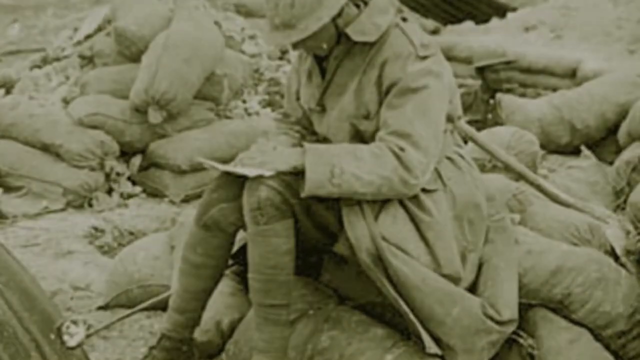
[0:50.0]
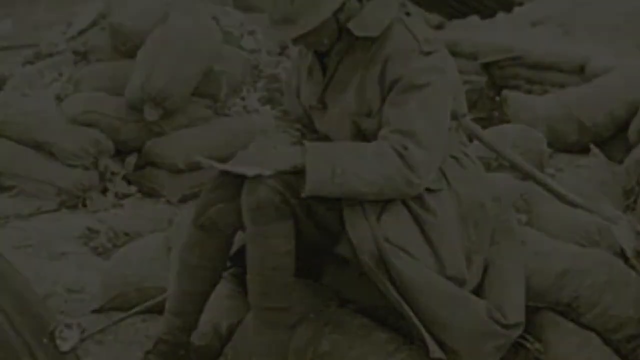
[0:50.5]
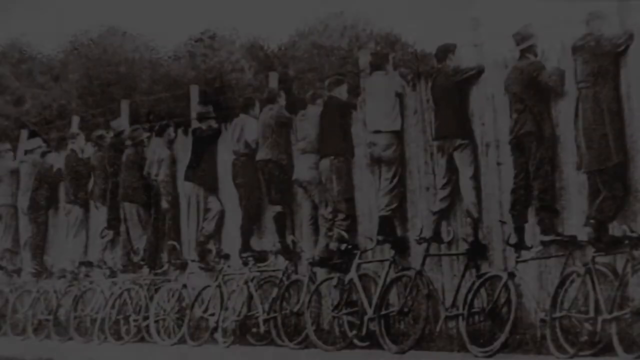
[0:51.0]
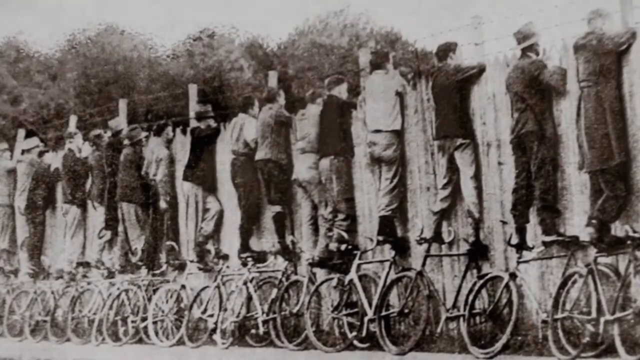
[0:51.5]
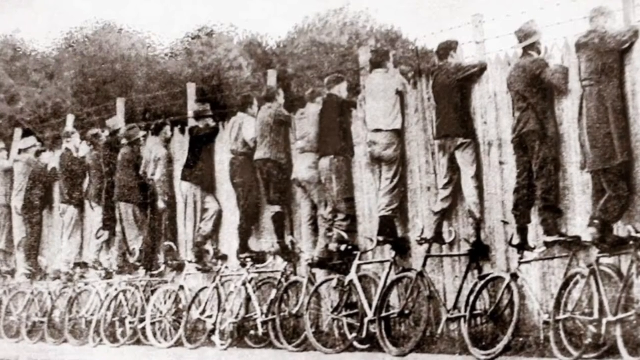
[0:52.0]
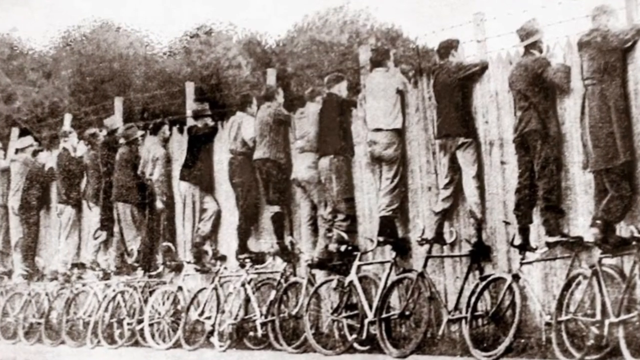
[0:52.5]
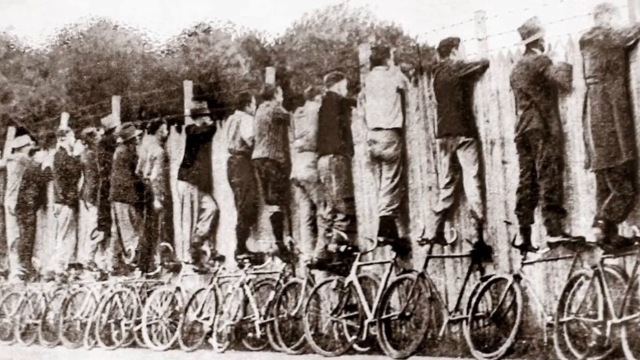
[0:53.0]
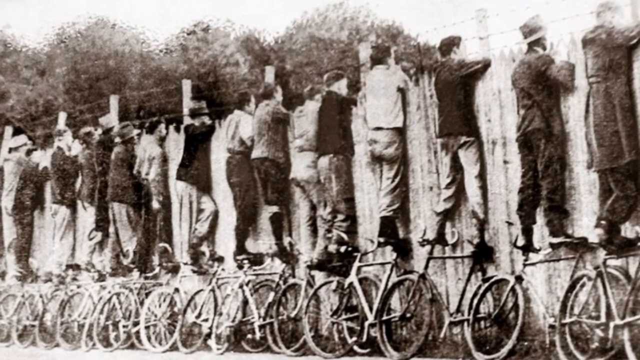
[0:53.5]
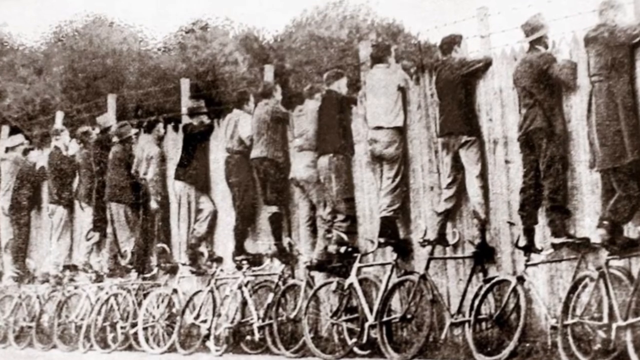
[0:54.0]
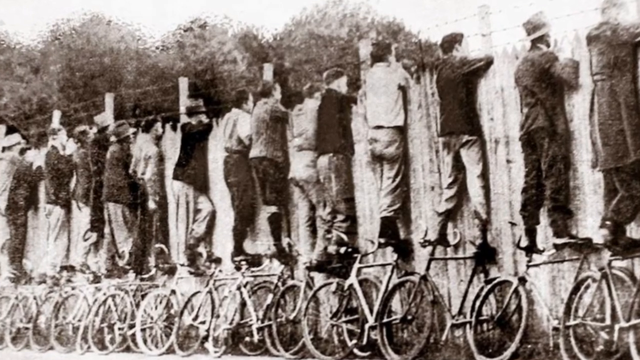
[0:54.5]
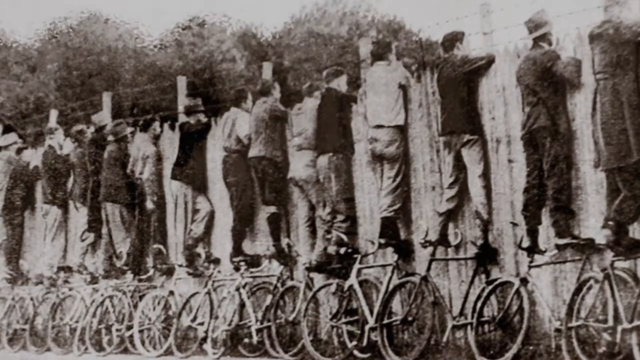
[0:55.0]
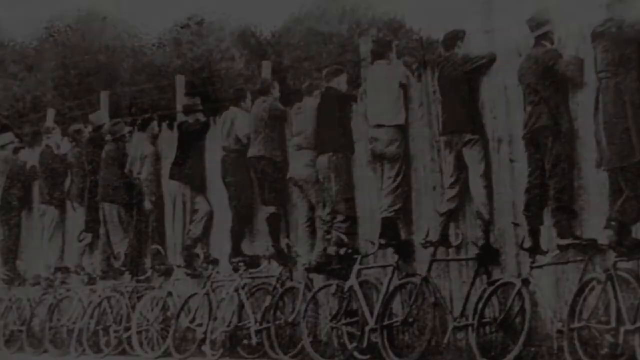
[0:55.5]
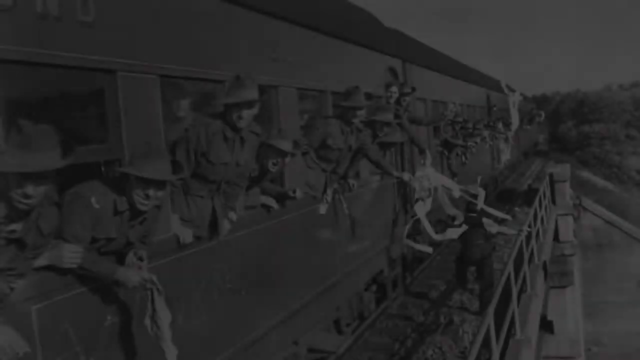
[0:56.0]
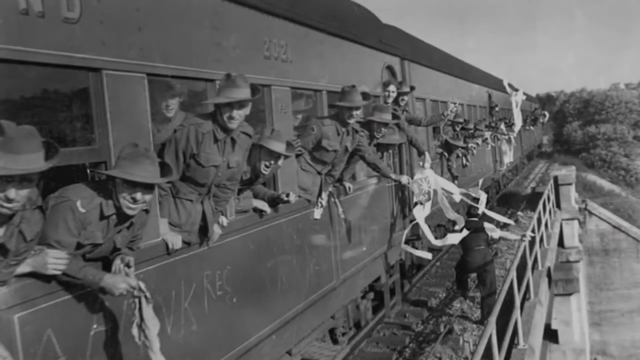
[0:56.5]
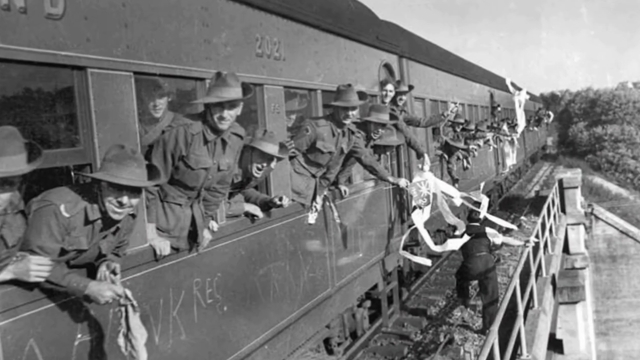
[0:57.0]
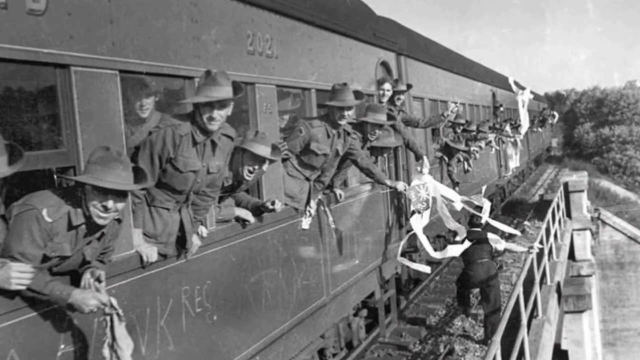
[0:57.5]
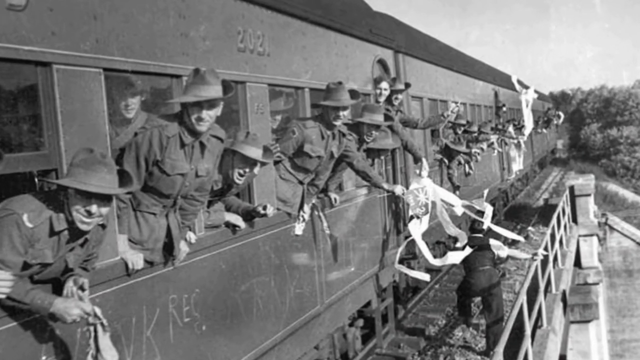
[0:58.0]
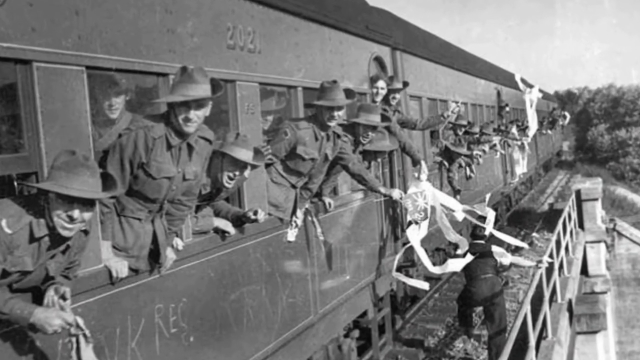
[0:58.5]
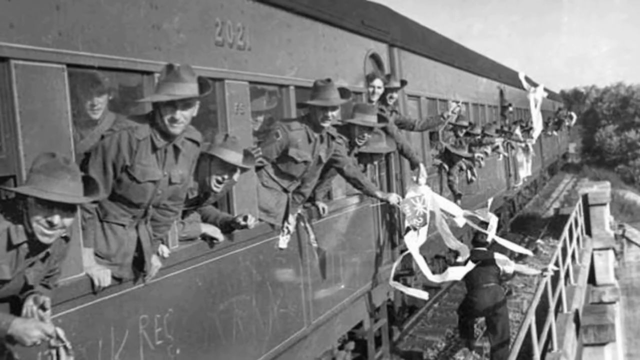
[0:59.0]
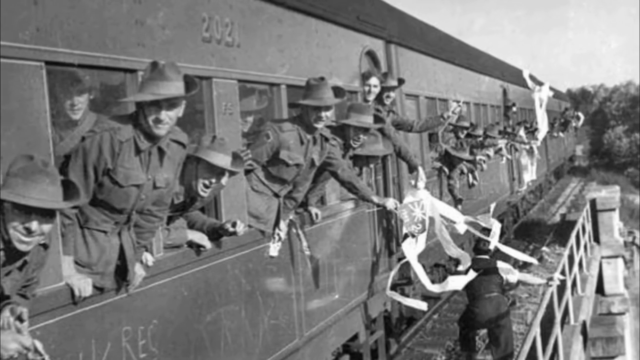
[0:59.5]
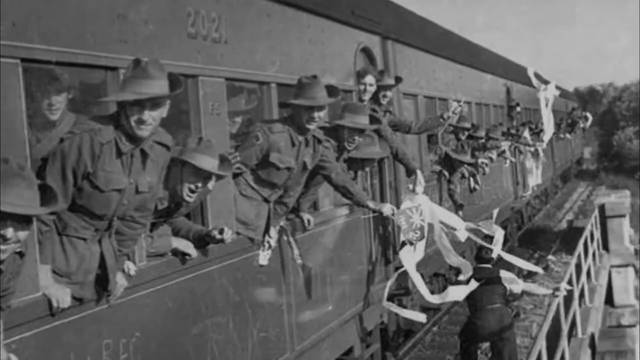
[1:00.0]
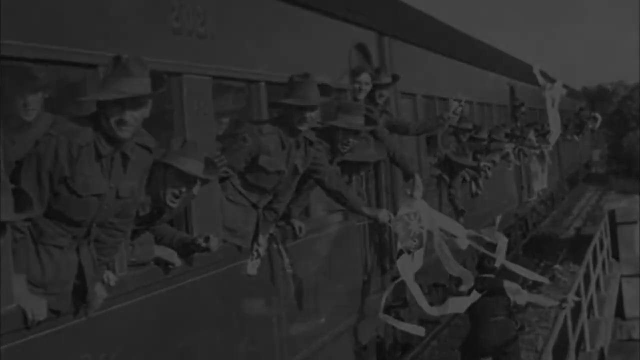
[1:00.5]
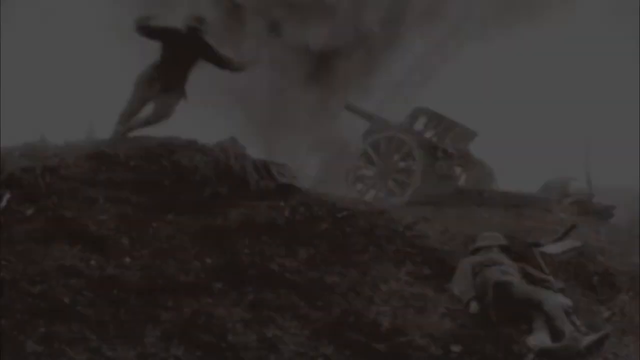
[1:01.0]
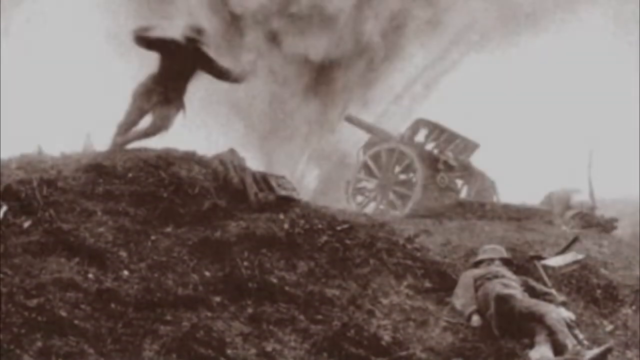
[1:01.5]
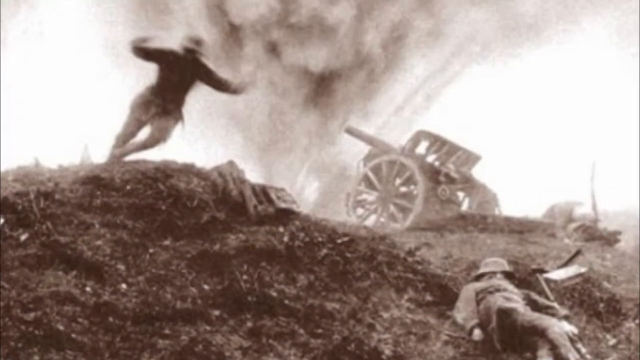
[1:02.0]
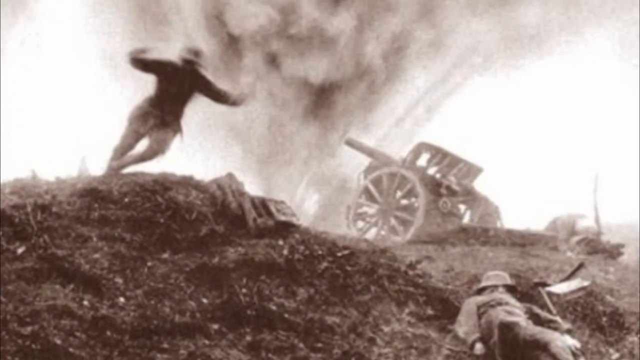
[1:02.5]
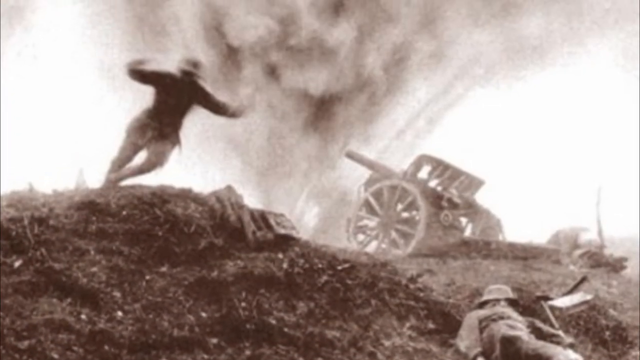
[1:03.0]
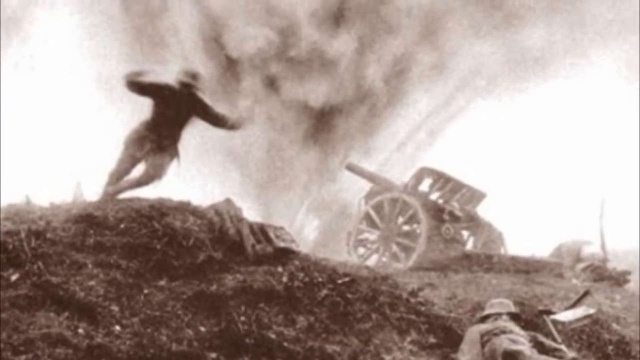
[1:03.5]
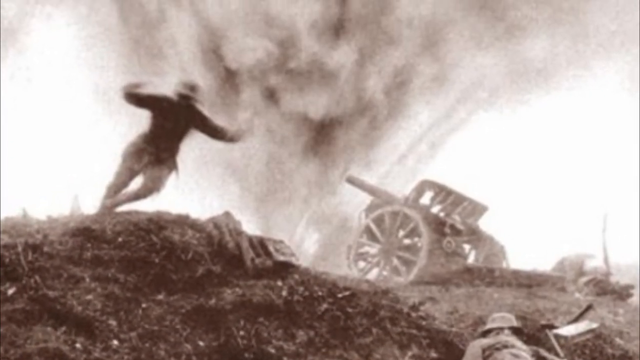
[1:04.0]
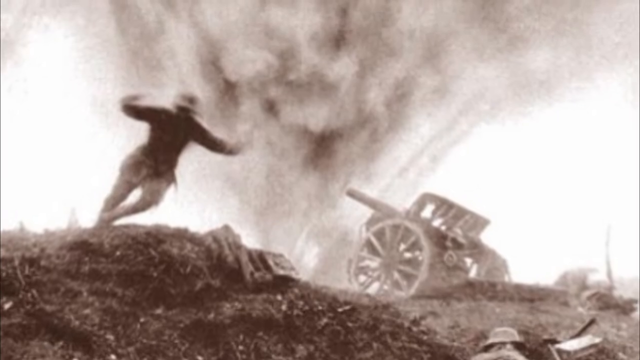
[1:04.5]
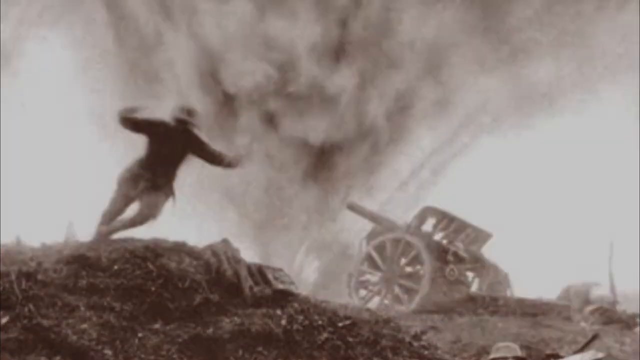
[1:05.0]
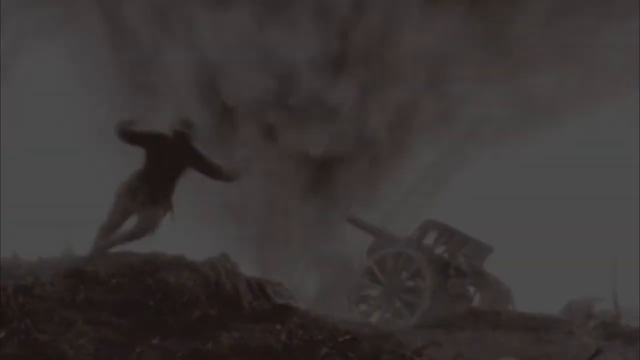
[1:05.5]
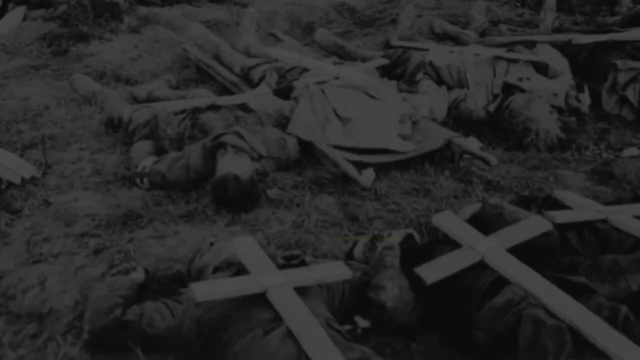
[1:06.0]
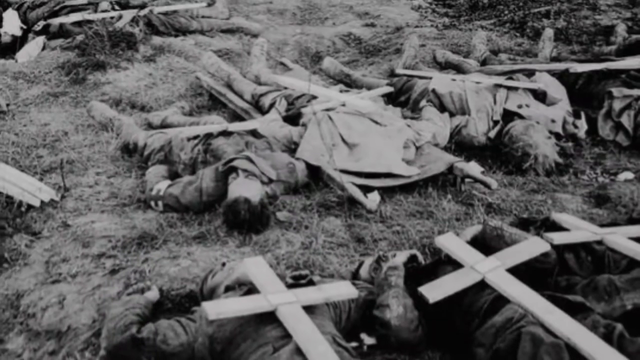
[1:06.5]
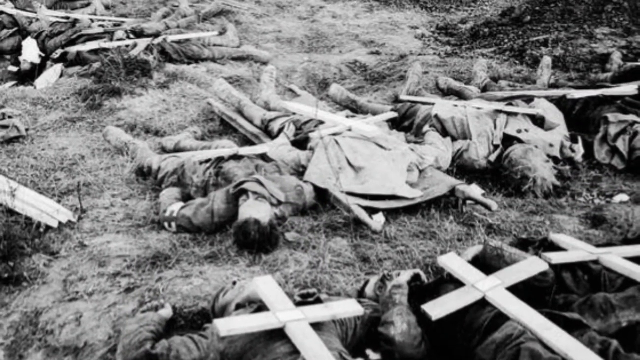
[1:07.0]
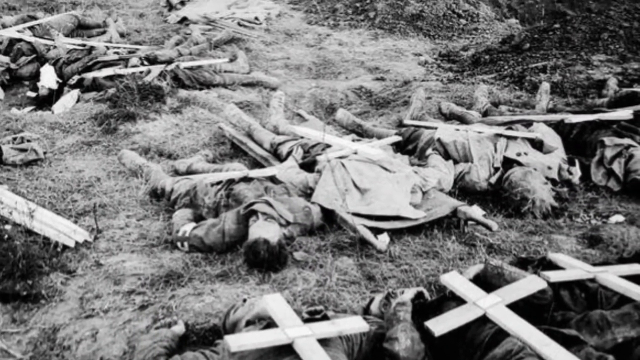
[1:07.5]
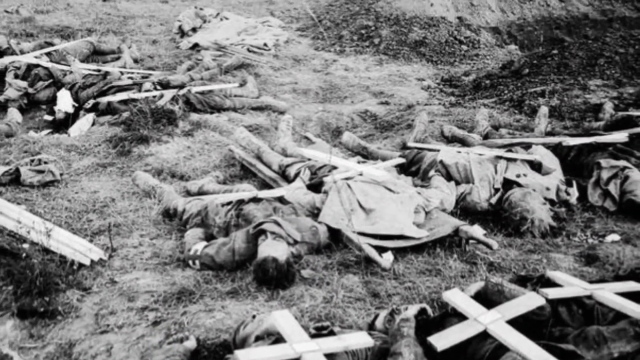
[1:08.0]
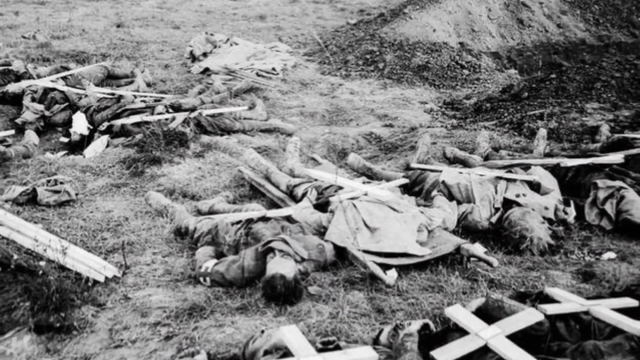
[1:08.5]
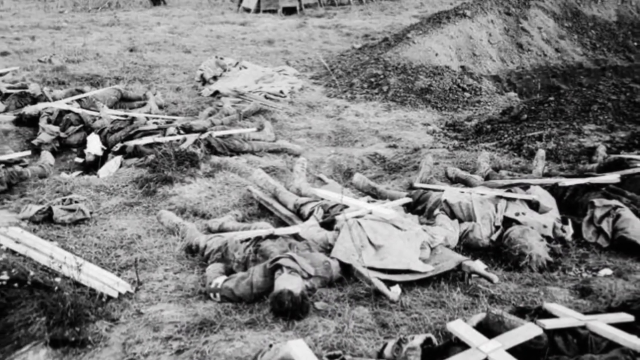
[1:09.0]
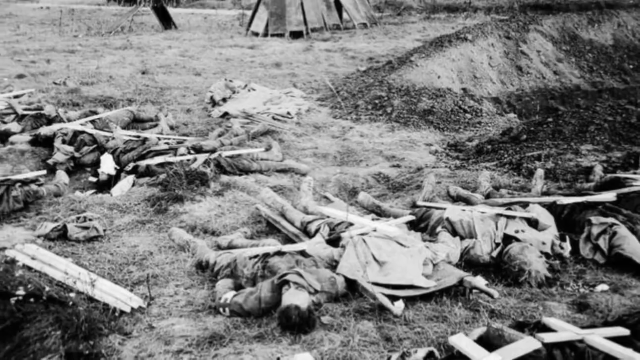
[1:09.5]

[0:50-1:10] A black and white, somewhat sepia-toned image shows a soldier writing a letter. A wrinkly piece of paper is perched on his knees; he holds it with his left hand and writes with a pencil in his right hand. He wears an officer's jacket and a hat, and many sandbags are around him. The view pans to an image of multiple men peeking over a fence, all standing on the seats of bicycles leaned against the fence. Multiple rows of barbed wire stick up above the fence. The men all appear to be wearing civilian clothing, and there are trees in the background. Next is a picture of soldiers hanging out of the windows of a train and various train cars. Some wave and some hold strips of paper. They are all smiling, and it appears to be daylight. Then comes an image of a bomb exploding: on the left side, a man on a hill is falling forward and is somewhat blurry. To his right are a cannon on wheels and the explosion of dirt. Down on the ground at the bottom right, a man who appears to be deceased is lying down.